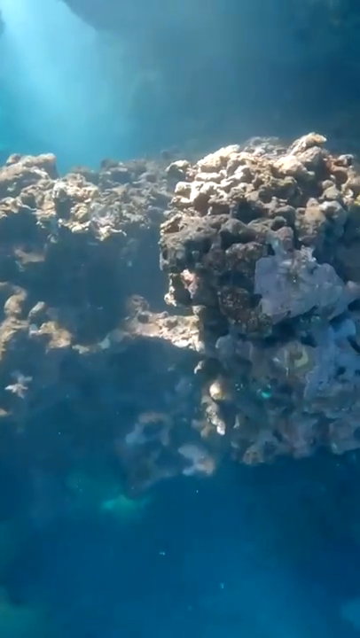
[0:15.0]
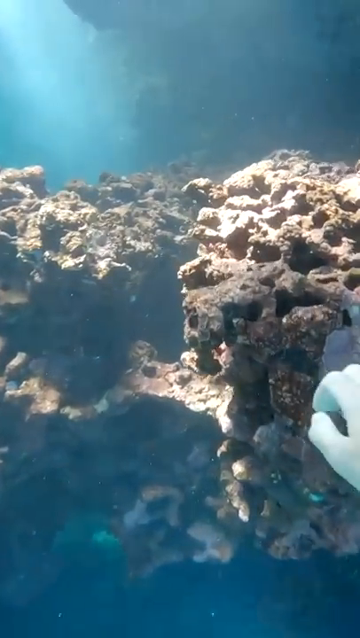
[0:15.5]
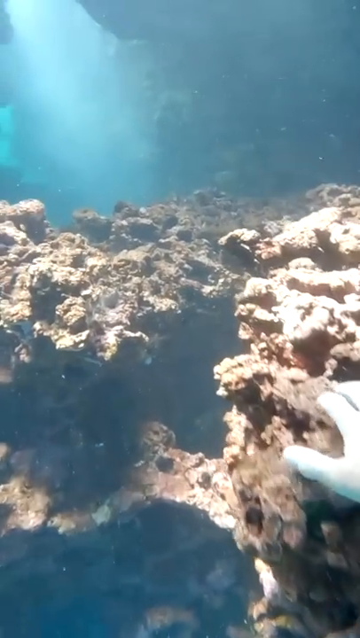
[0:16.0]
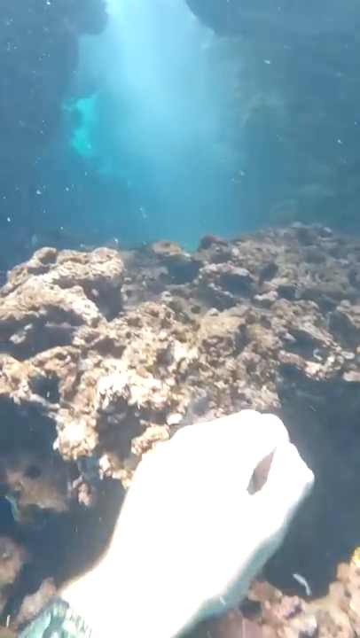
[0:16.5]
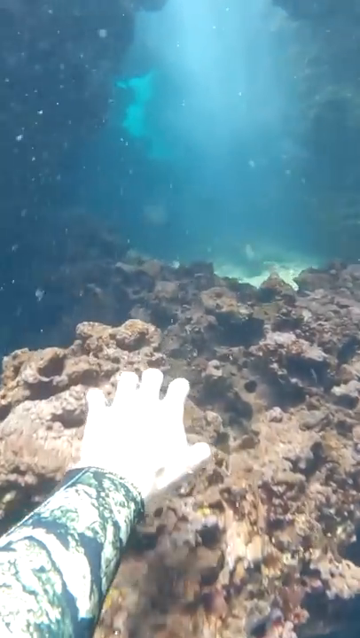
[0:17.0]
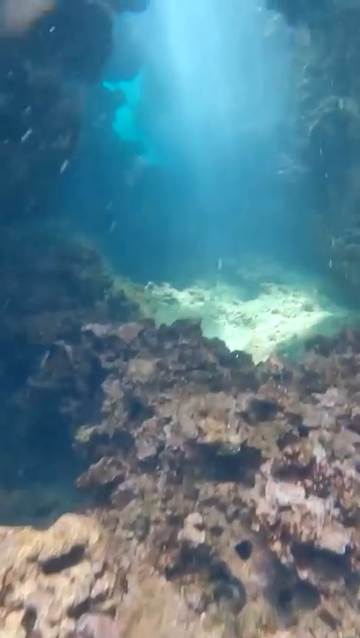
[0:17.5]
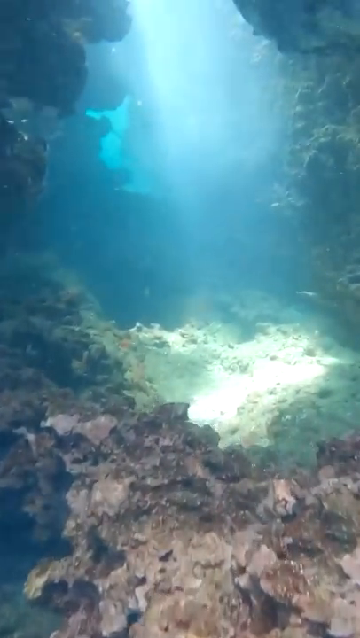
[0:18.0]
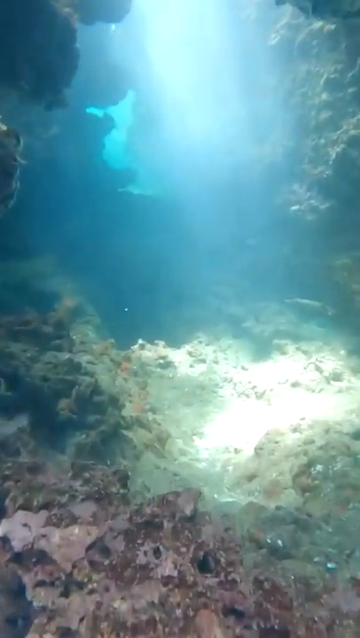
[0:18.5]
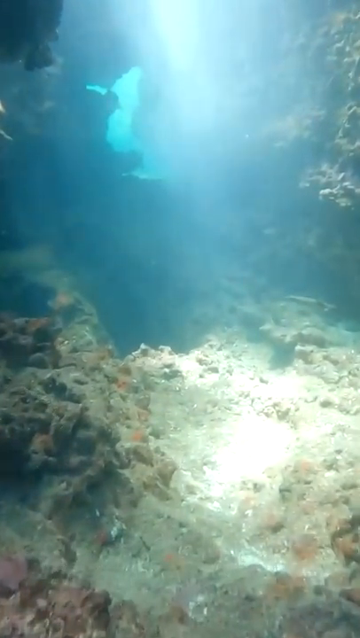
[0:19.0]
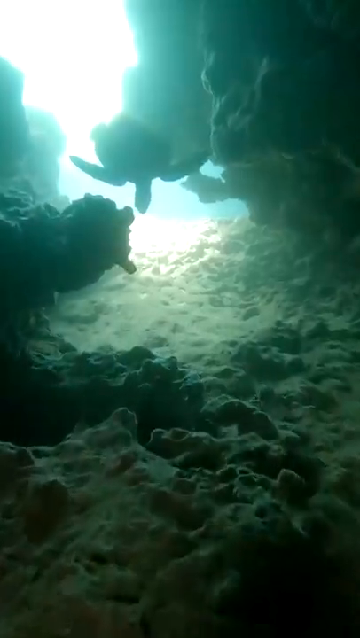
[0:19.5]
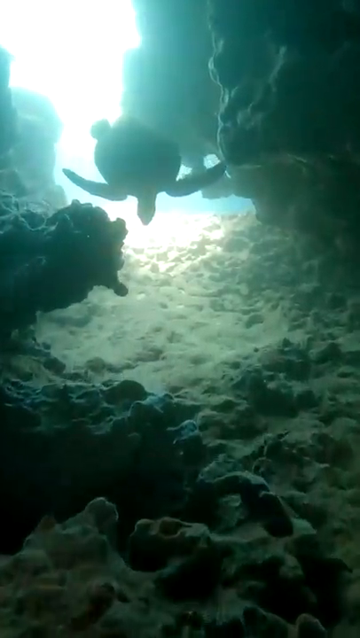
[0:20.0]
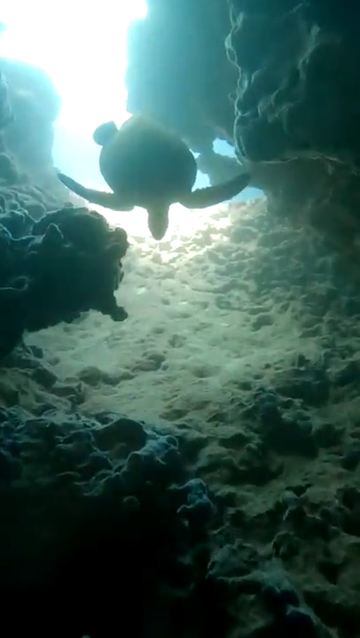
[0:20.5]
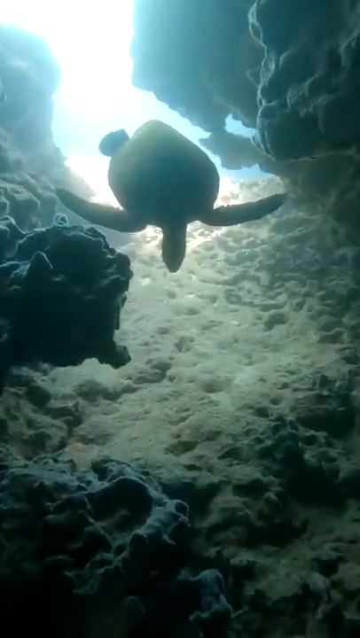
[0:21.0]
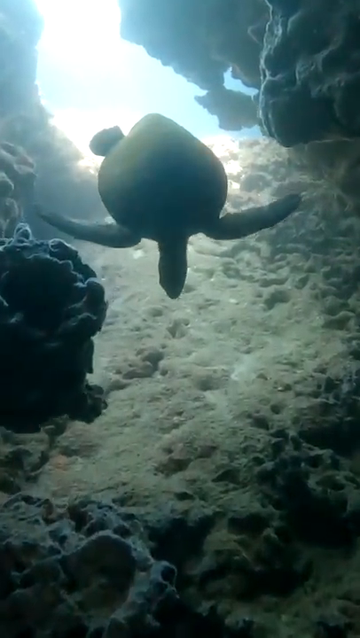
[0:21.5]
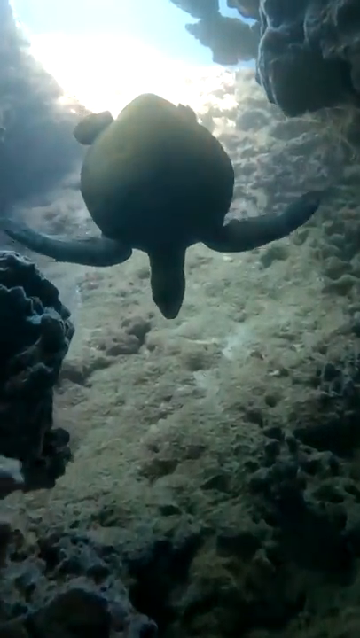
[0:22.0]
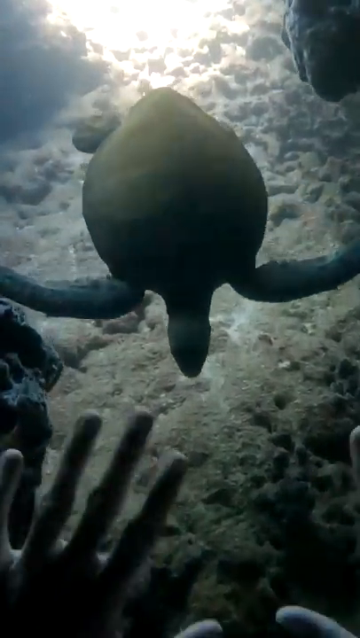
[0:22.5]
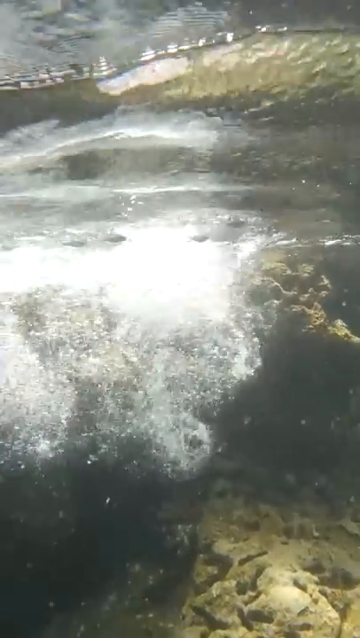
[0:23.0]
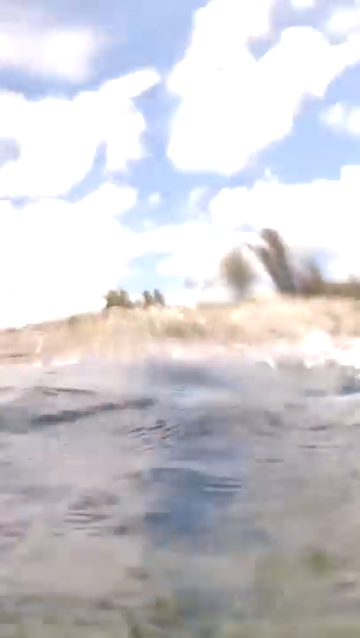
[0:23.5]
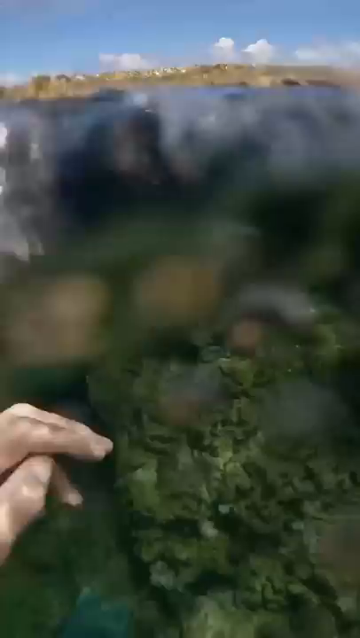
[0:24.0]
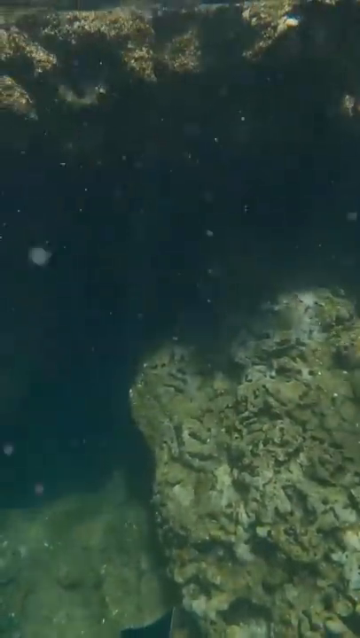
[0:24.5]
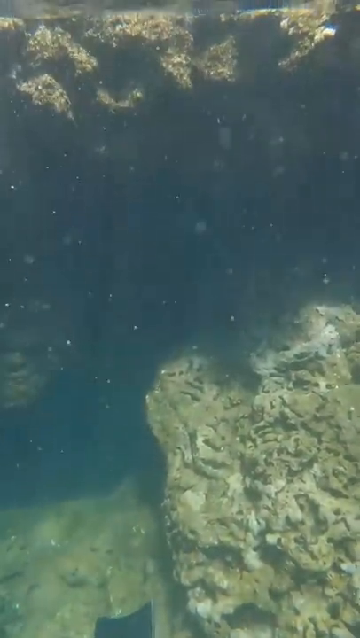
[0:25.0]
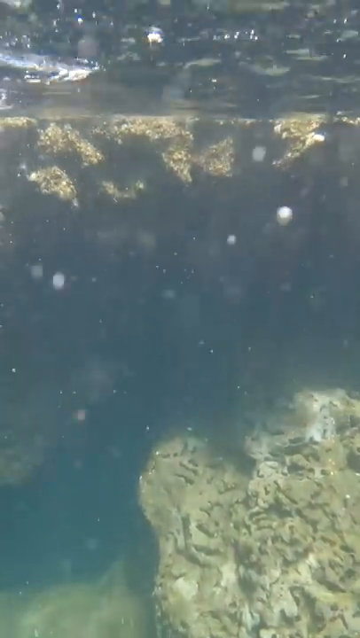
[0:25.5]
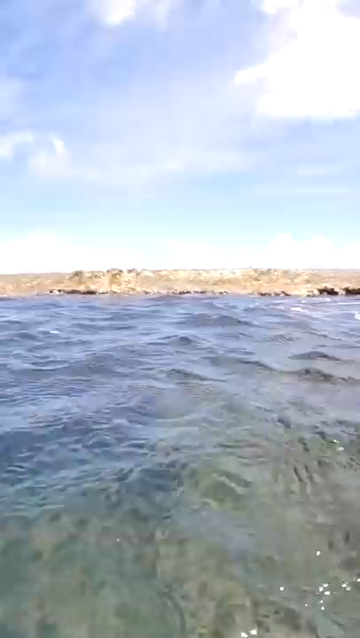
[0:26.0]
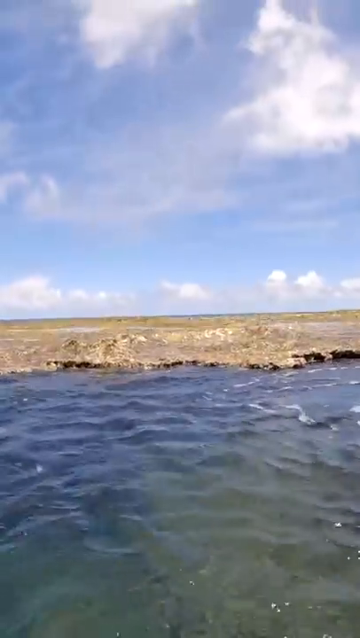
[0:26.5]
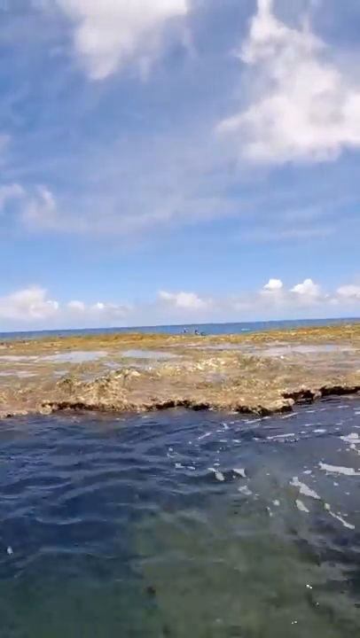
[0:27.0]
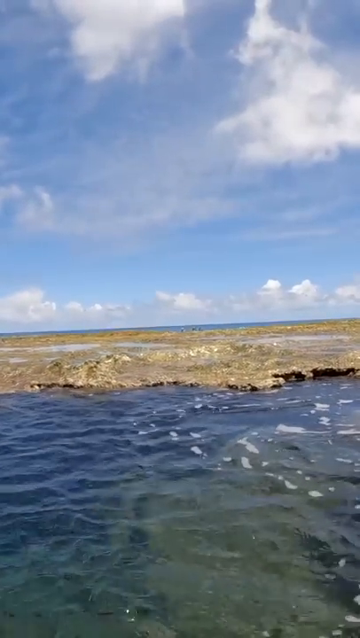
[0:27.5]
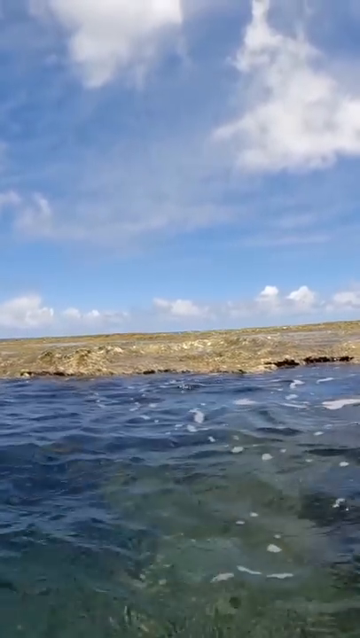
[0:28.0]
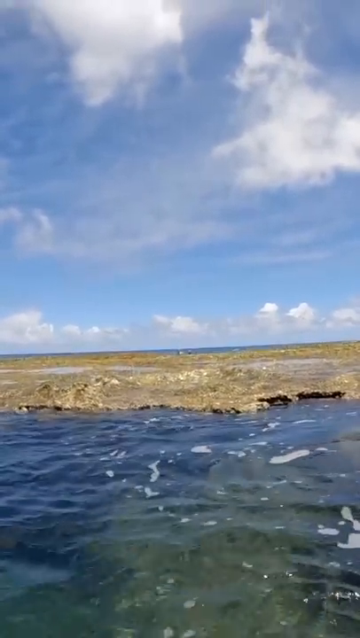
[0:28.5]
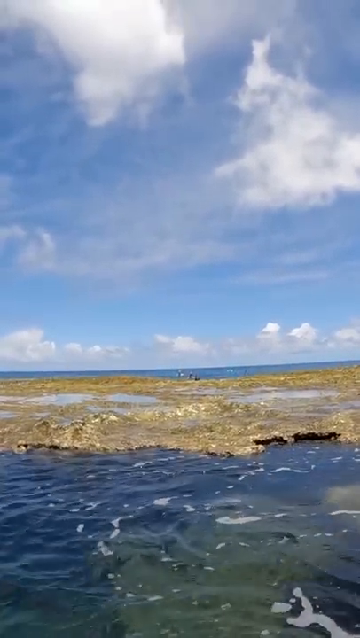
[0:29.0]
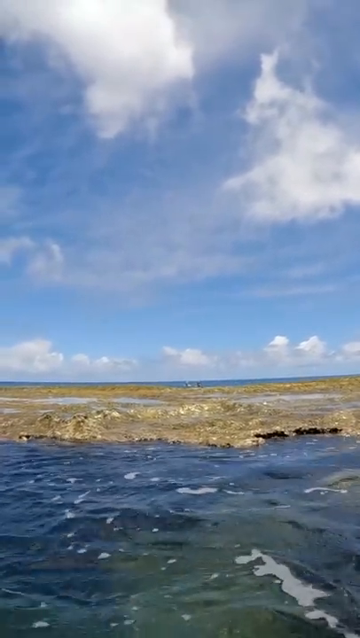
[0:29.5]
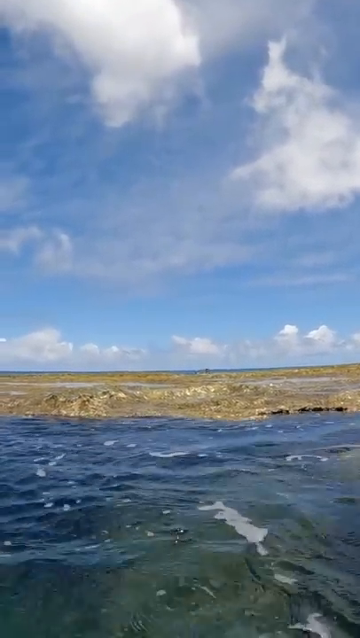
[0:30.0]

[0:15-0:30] The video goes further into the area, a shoreline with reefs, possibly somewhere in the Pacific Ocean based on the reefs. From the point of view of a male, apparently the main protagonist, a male hand is visible as he swims between the caves, showing the depths and creatures inside. The main creature is a sea turtle, swimming below him, while he touches and grabs onto the reef. The reefs have different shapes. The light varies; he seems to go a little deeper at some points while swimming and then comes back into the light, coming out of the water. On top of the water there appear to be piles of weed, some kind of sea vegetation, and no land is visible.